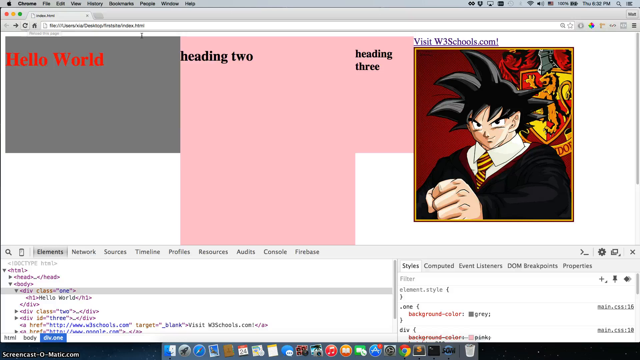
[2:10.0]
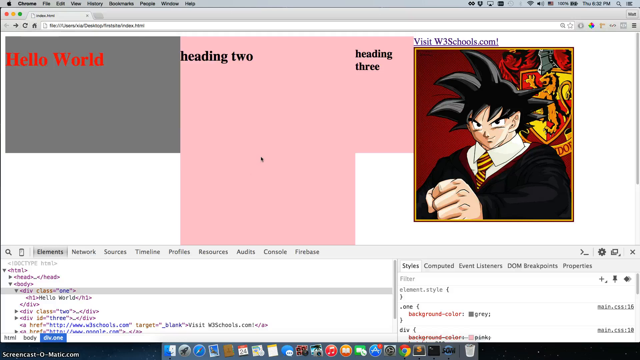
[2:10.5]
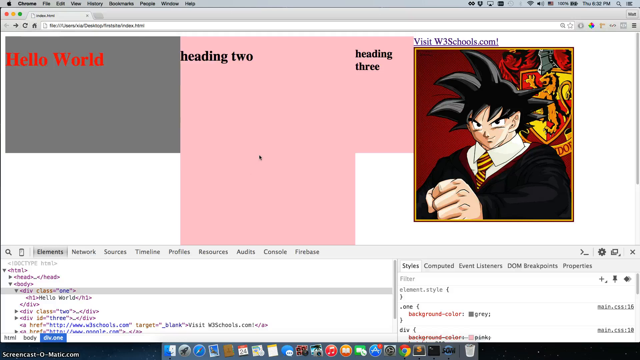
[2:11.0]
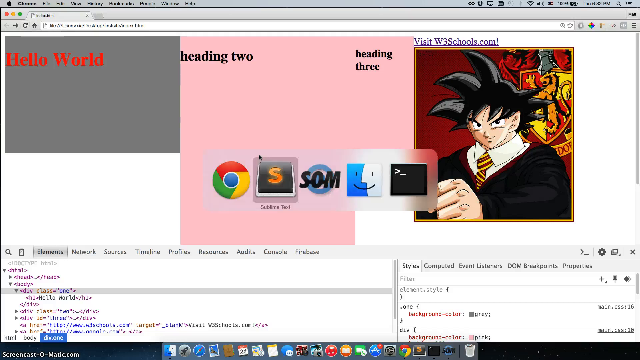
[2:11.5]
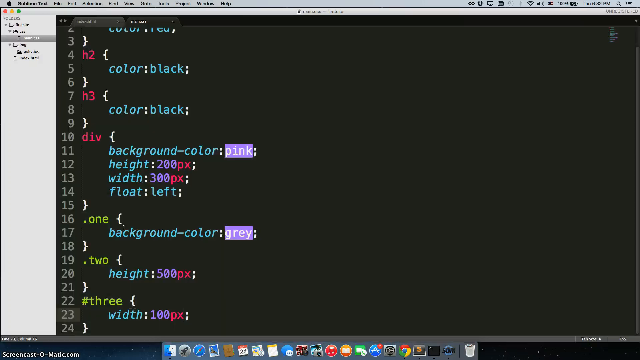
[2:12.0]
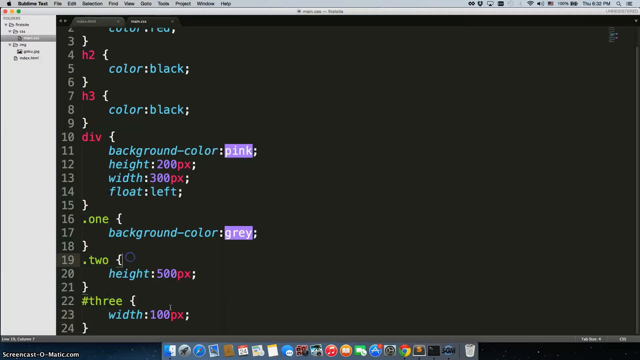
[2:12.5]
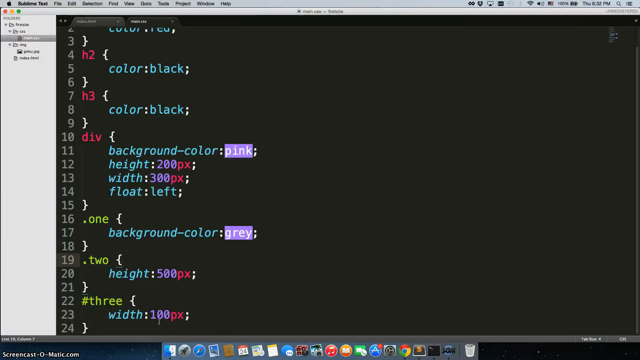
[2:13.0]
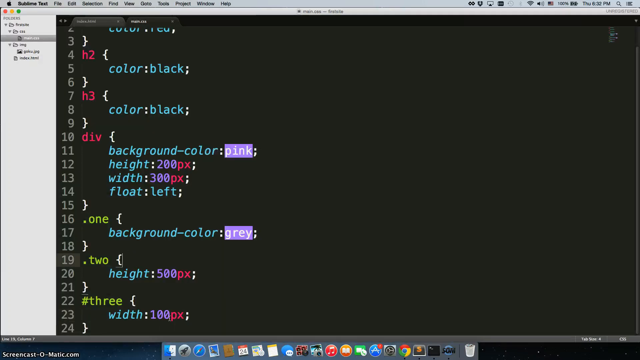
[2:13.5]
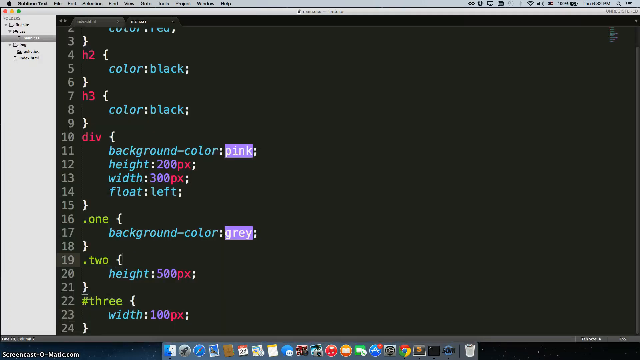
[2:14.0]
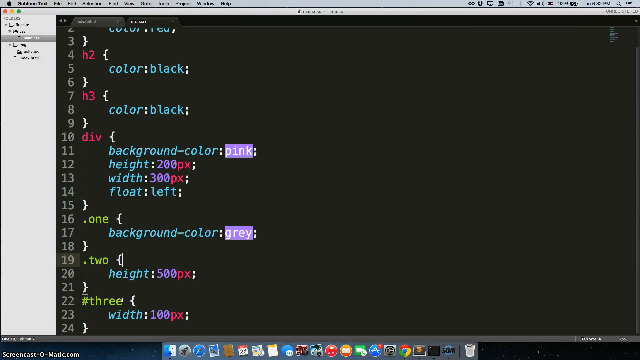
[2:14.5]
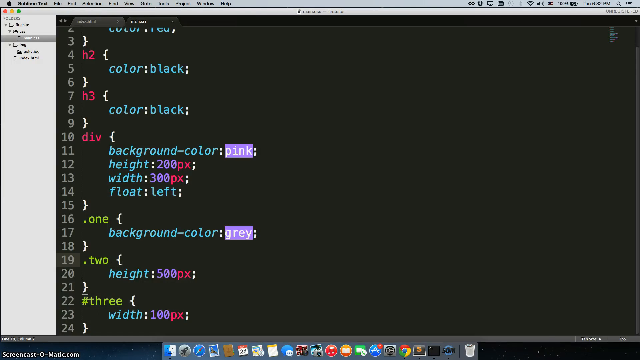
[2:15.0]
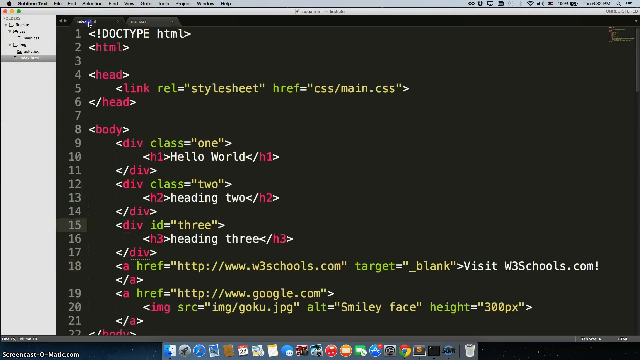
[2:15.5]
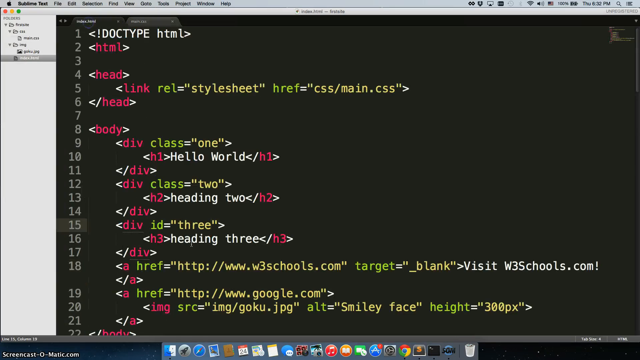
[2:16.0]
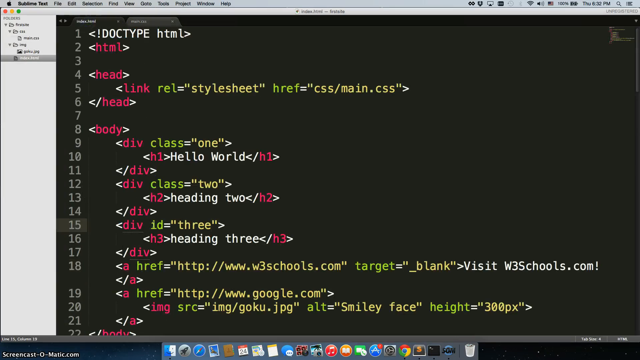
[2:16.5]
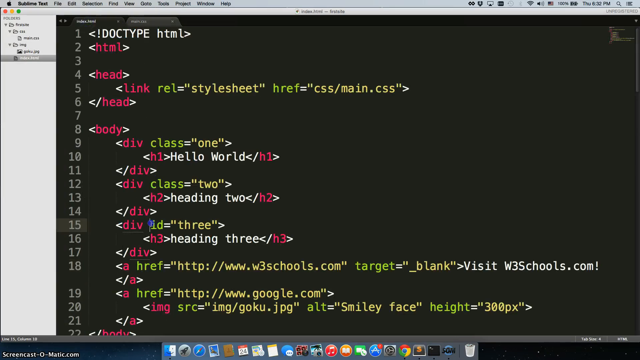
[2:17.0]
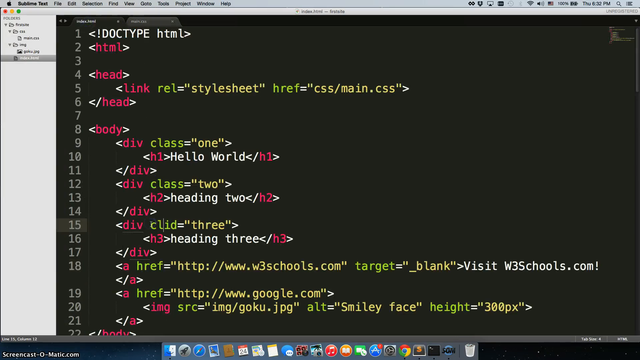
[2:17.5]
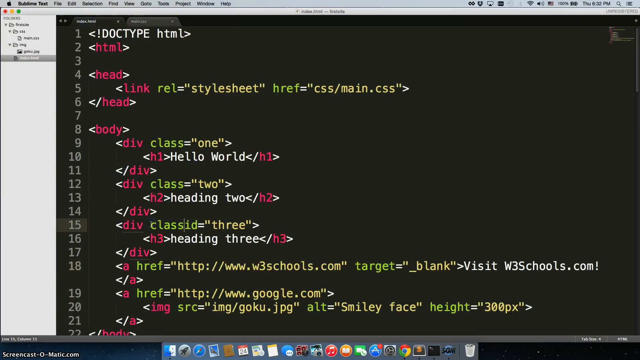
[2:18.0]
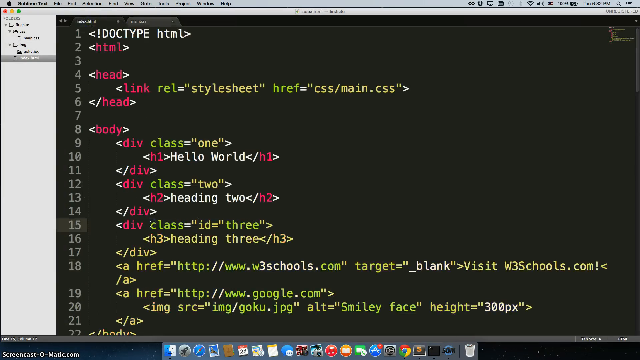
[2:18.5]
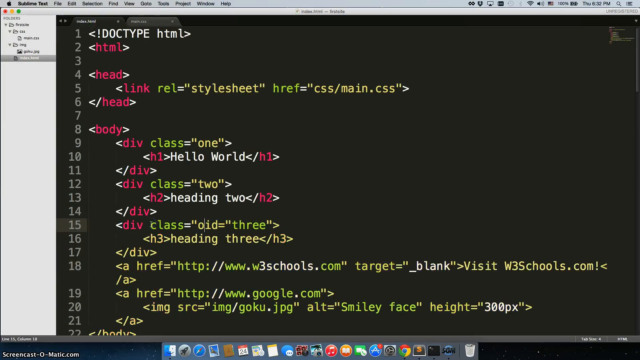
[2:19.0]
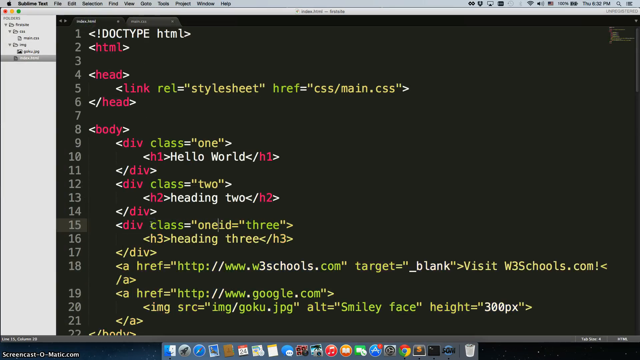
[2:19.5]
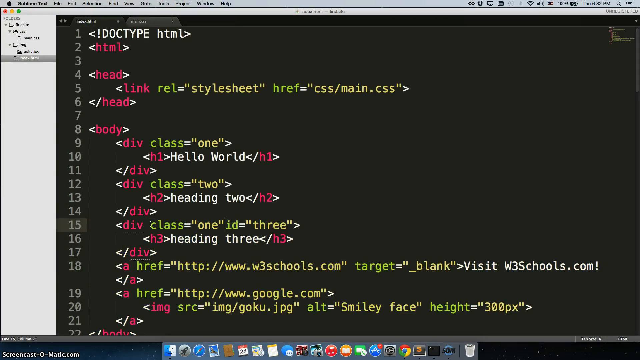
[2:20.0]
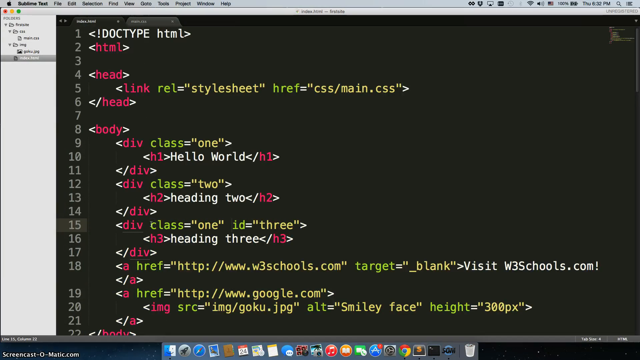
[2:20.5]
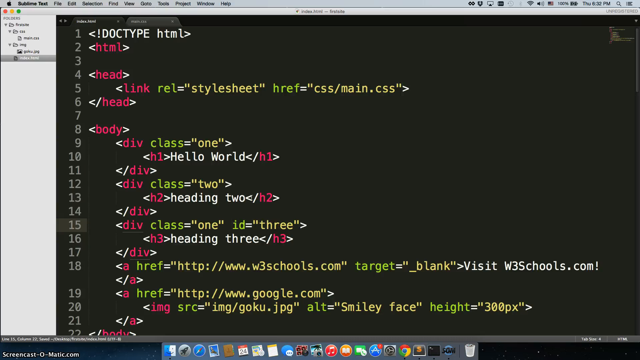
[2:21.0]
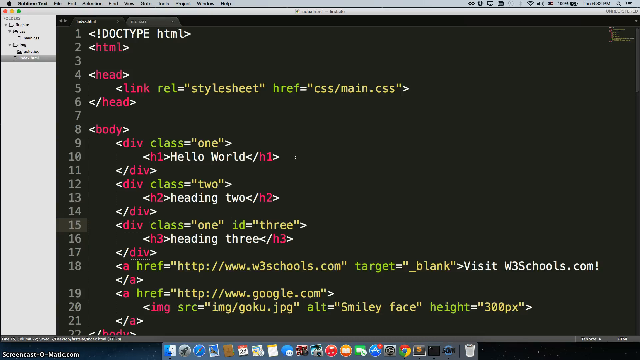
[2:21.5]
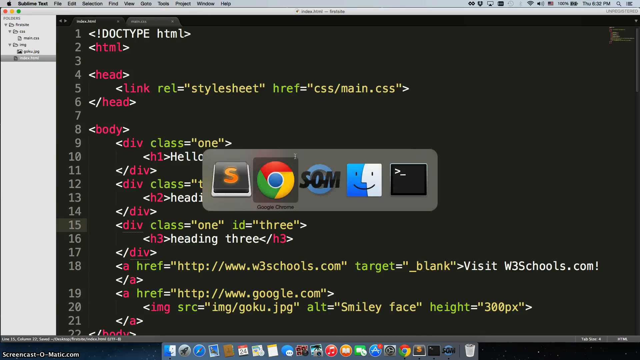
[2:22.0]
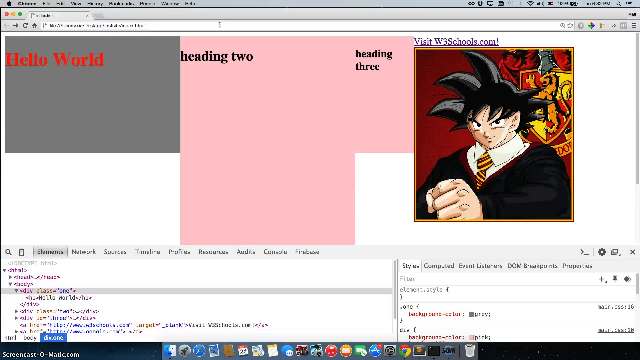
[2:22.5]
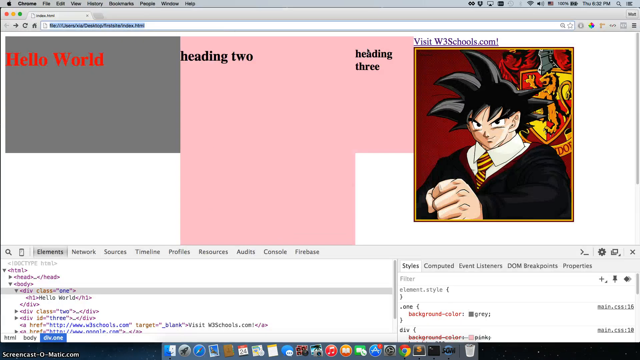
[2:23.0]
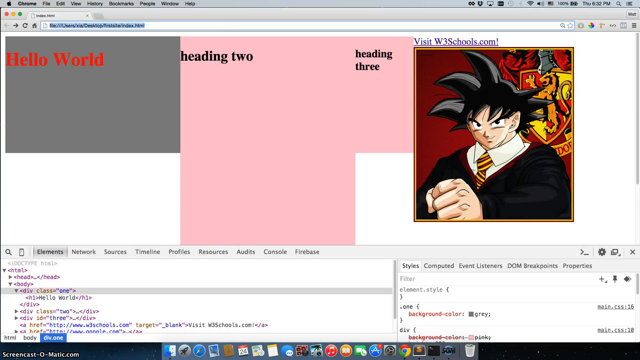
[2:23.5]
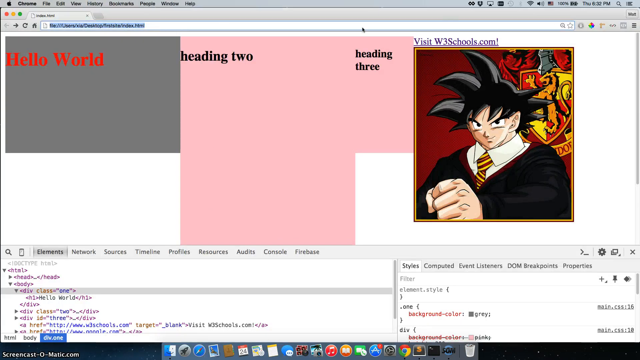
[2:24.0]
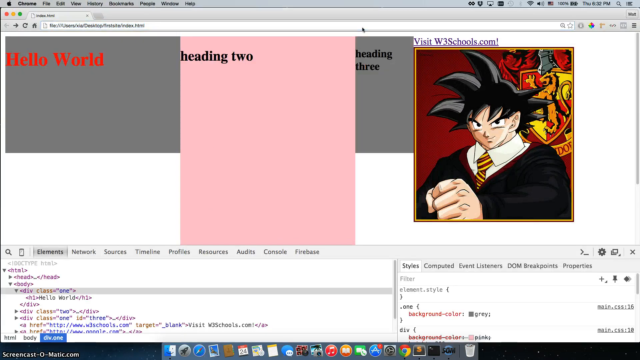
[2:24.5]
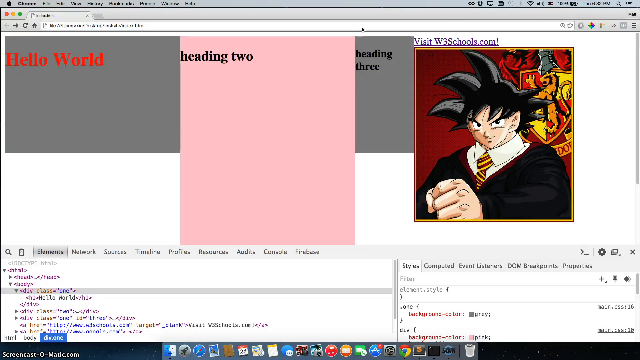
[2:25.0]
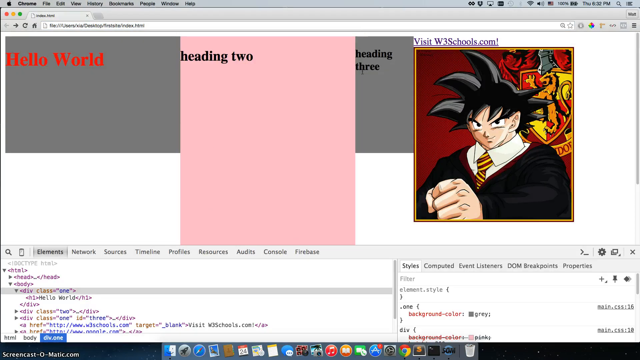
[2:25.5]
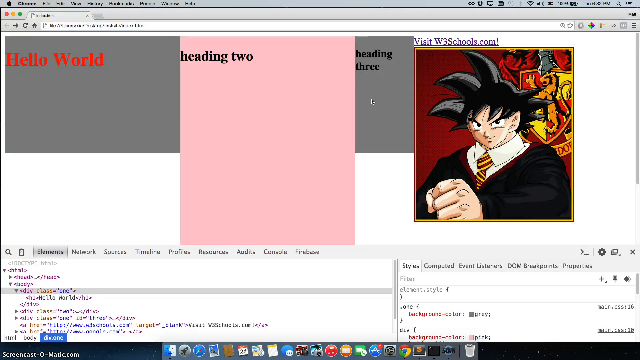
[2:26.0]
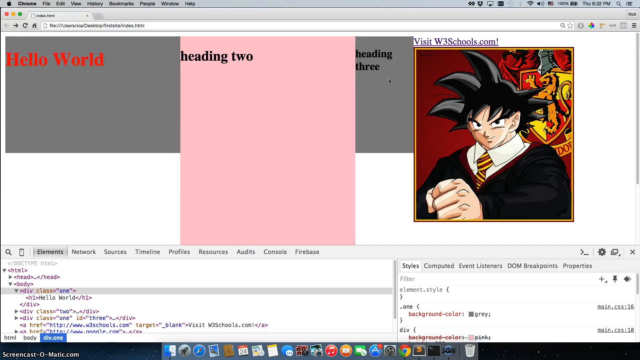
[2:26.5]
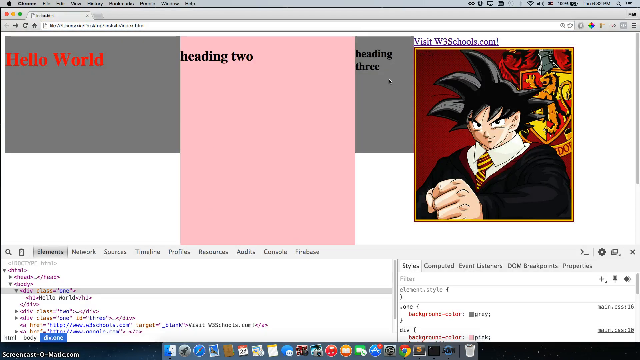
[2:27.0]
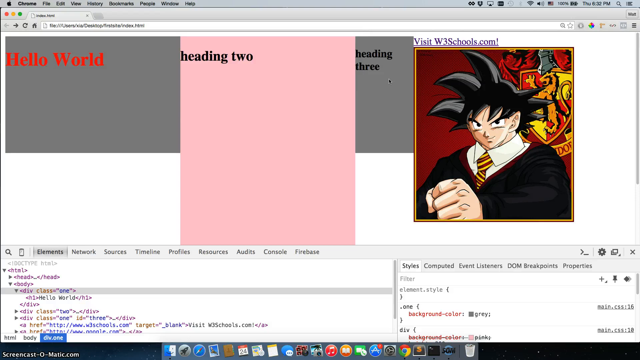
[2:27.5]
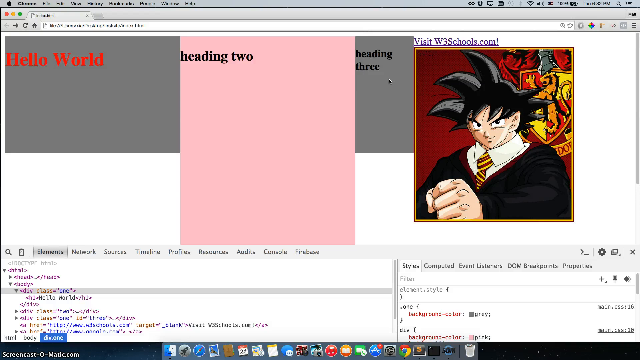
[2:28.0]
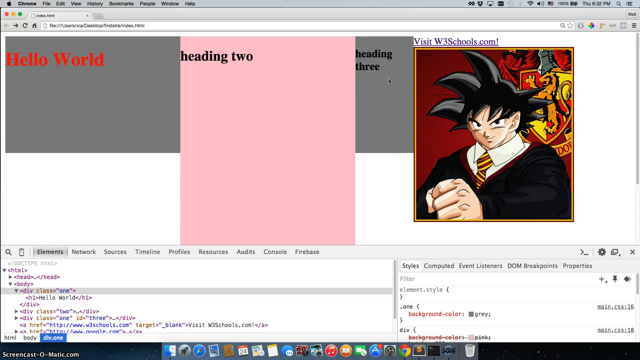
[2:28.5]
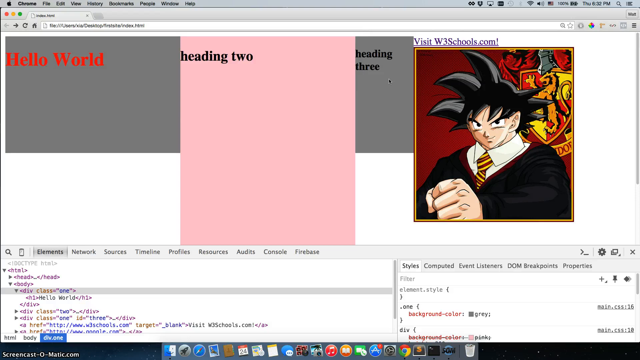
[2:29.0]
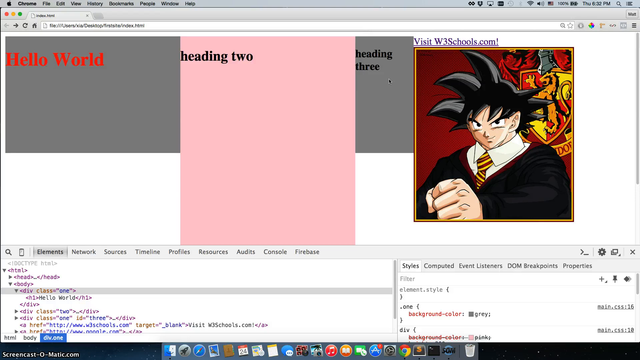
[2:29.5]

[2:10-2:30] The Google Chrome window is shown, then the view switches to the coding screen with text in sea green and red. It moves back to the original window, where class equals "1", in inverted commas, is typed on line 15. The view switches back to Chrome, where text is typed into the text bar; the box titled heading 3 changes colour and then turns back to pink. Next to the heading 3 box is the heading 2 box with a pink background and the "Hello World" box with a grey background. To the right of the heading 3 box is a cartoon character with a fist bump.